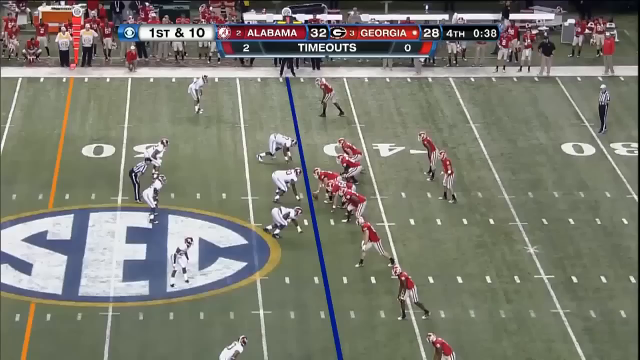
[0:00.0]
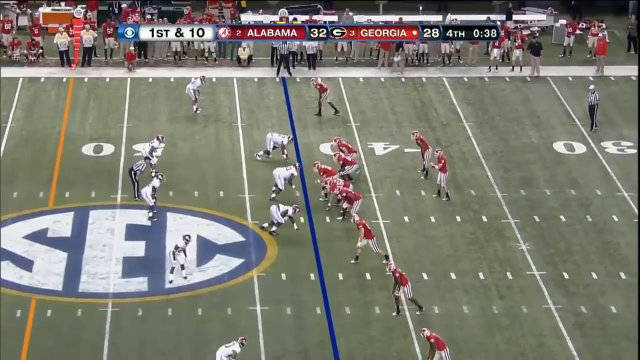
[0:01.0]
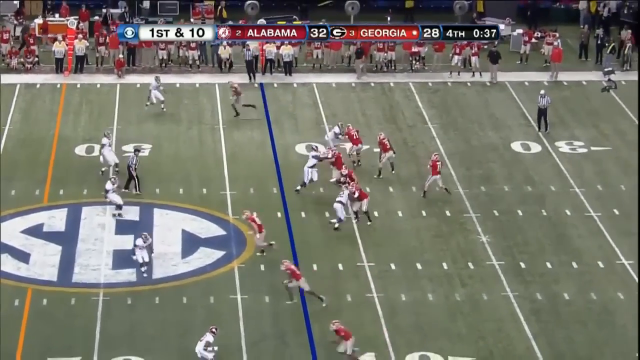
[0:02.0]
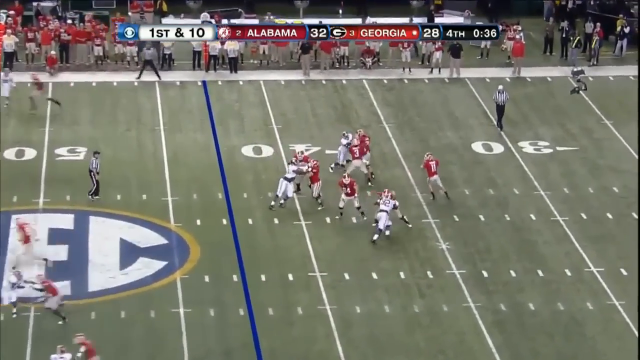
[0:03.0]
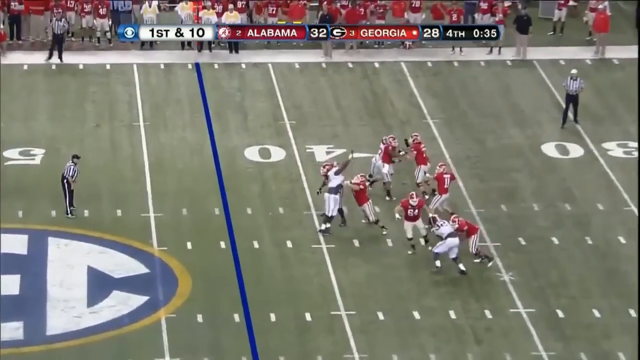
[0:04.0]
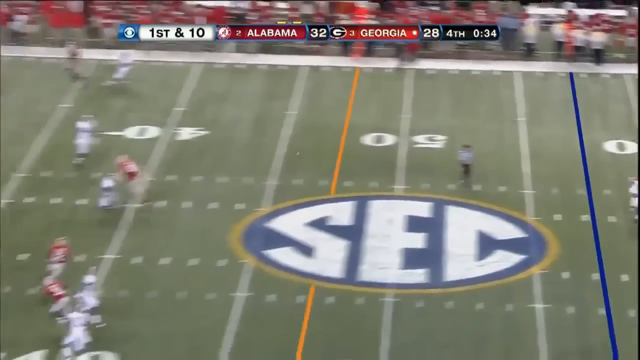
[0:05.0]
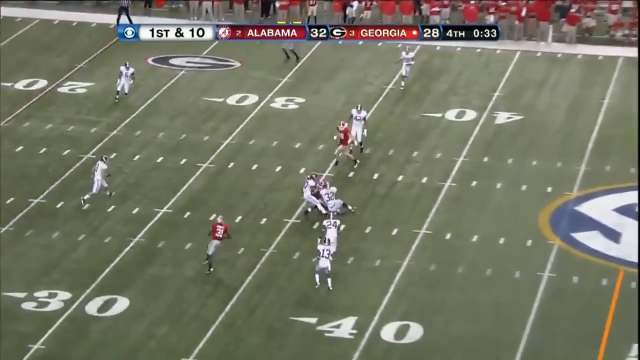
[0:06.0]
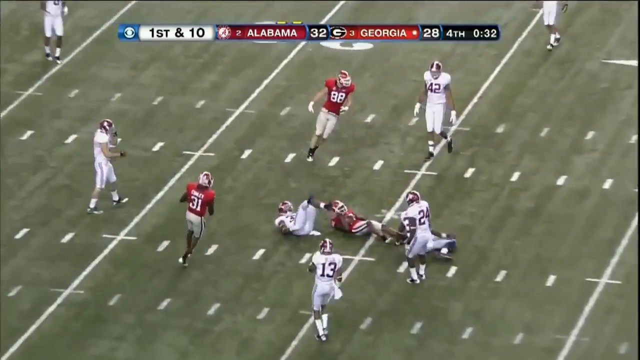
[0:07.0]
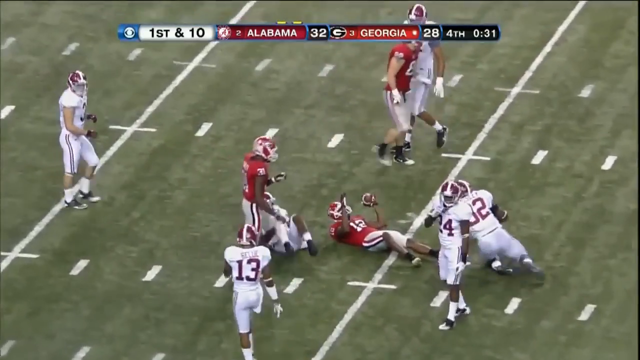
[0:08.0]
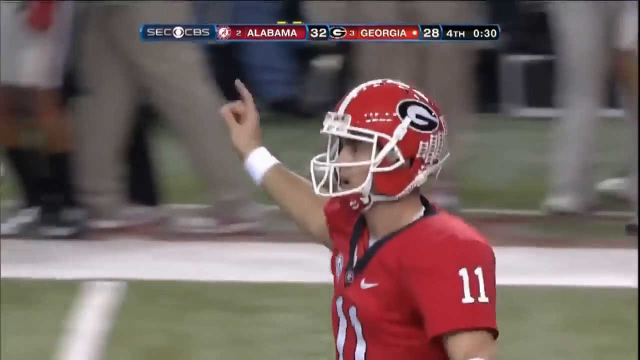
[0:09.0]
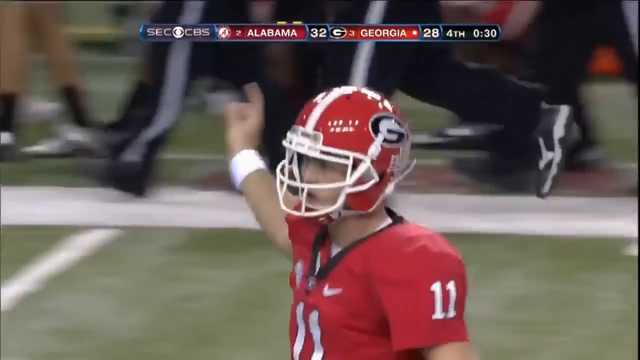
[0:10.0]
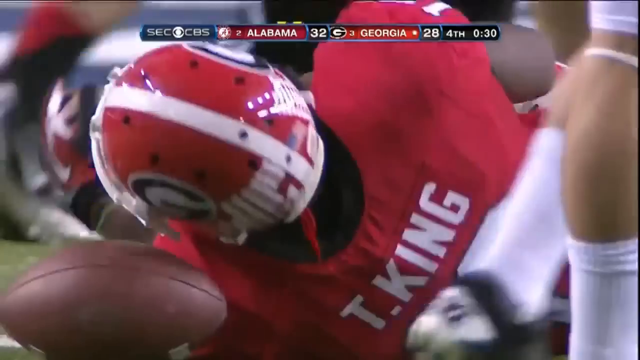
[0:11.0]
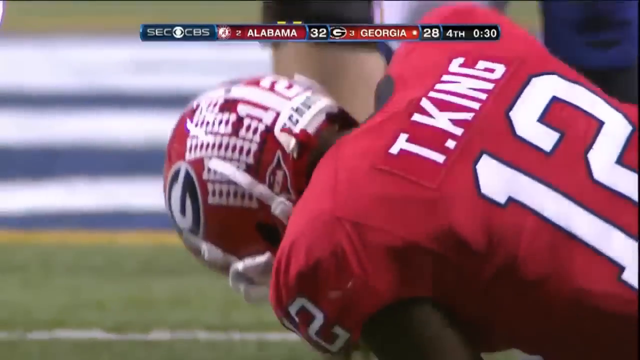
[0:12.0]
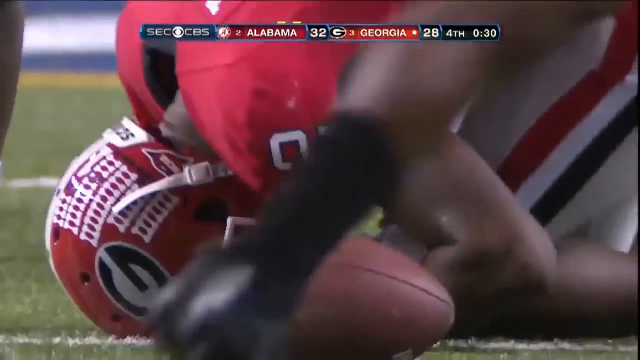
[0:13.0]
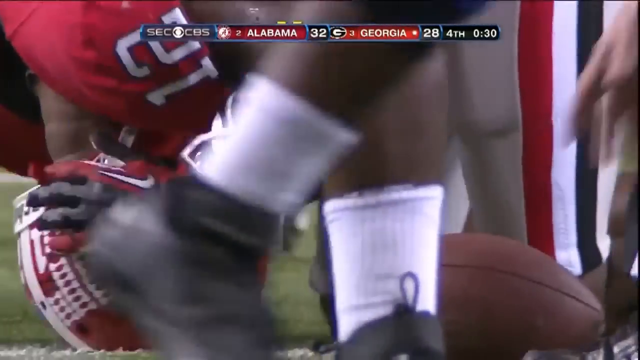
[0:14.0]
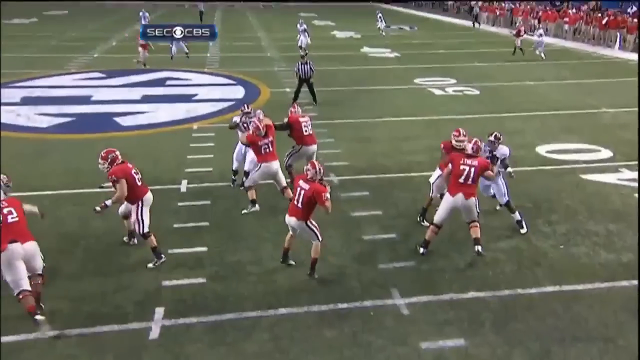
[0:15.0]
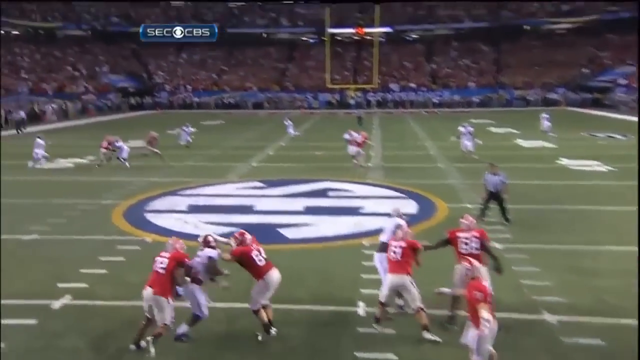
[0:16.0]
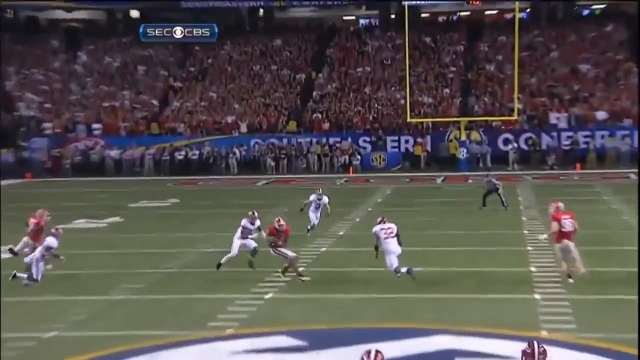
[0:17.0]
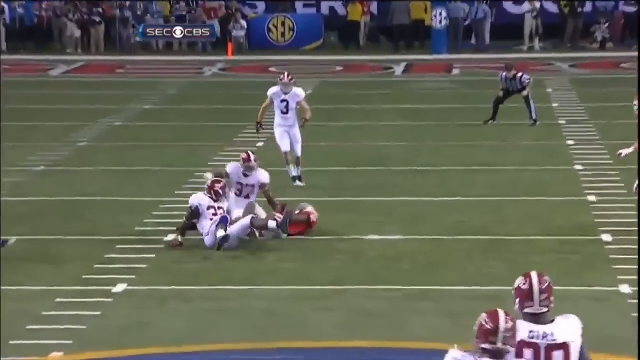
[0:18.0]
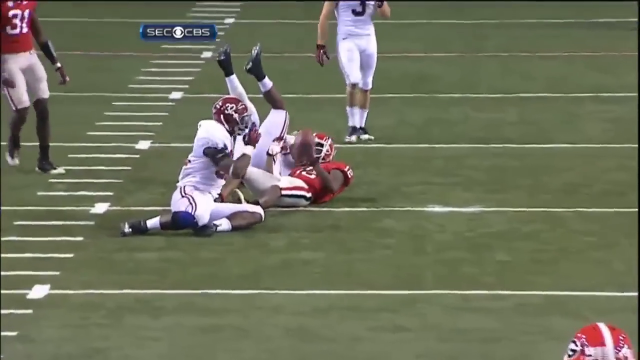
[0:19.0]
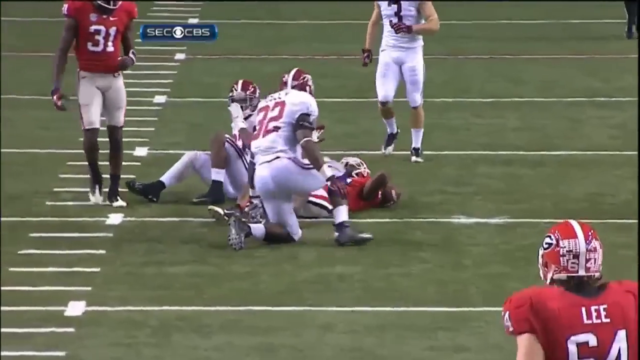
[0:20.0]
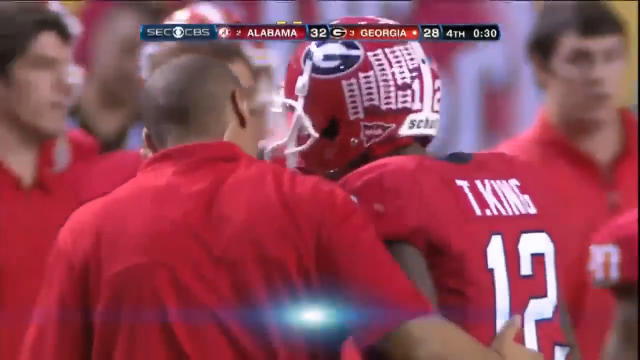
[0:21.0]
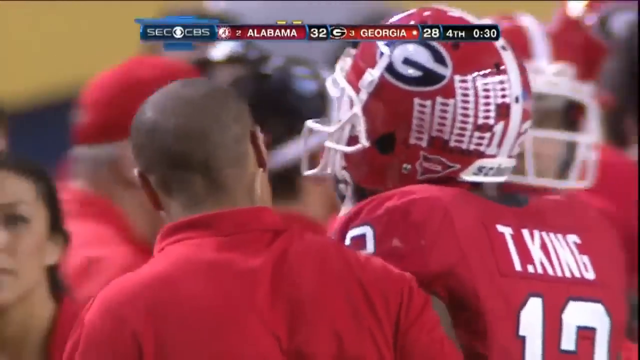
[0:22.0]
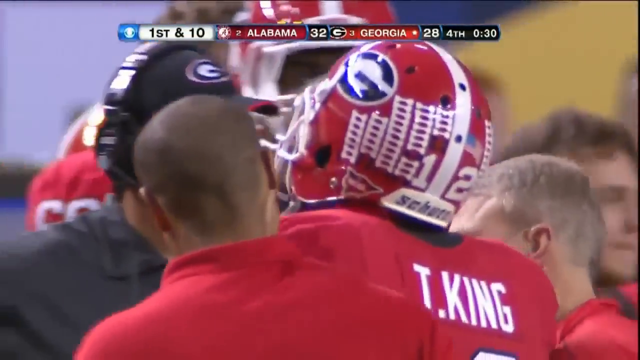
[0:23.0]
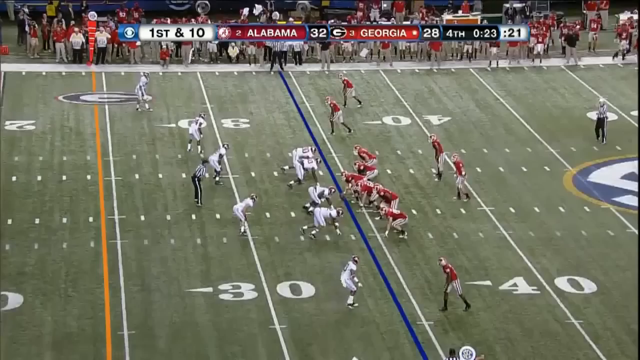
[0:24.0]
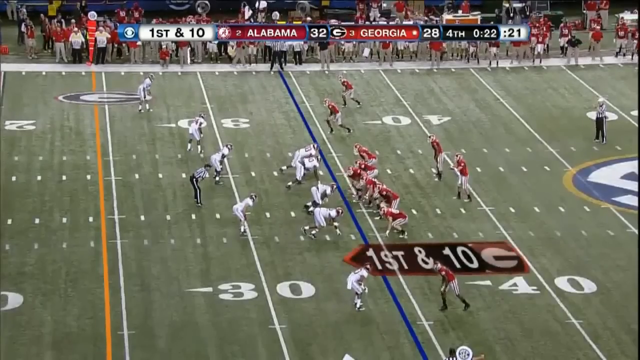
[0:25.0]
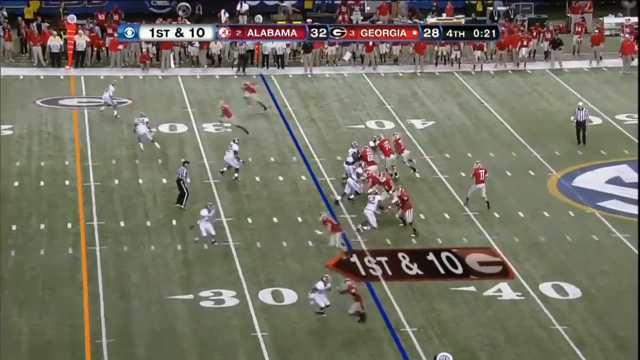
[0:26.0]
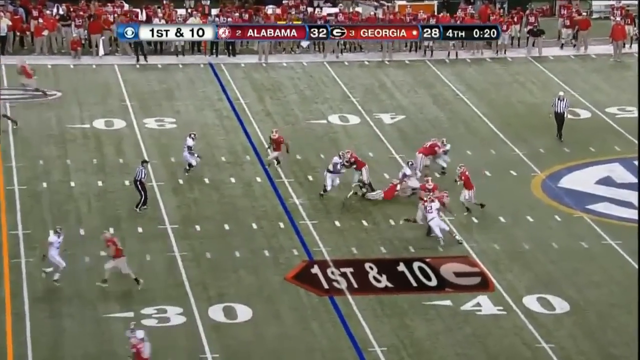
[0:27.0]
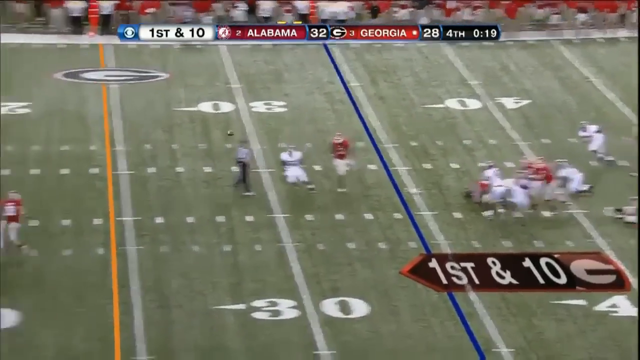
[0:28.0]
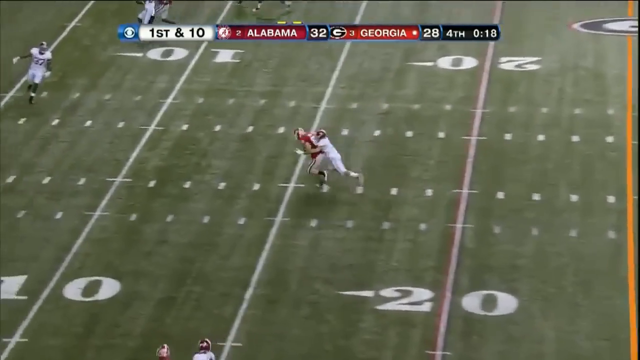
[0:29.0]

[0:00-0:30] An overhead view shows what appears to be a football game. At the bottom left of the field, "SEC" is painted in white letters in a sort of oval shape. Two teams are on the field: on the right side is the offense, wearing red jerseys and silver pants, and on the left side is the defense, wearing primarily white jerseys and pants. A referee is in the middle left, and a second referee is at the very top right. At the top of the video is the scoreboard: the top left reads "1st and 10", to the right of that Alabama has 32 points and Georgia has 28 points, and at the right it shows the 4th quarter with 38 seconds. Below the team names, the timeouts show that Alabama has two and Georgia has zero. The ball is snapped, the quarterback catches it, walks backwards a couple of steps, and looks to the bottom left before getting ready to throw. He throws the ball quite far, probably about 20 yards, and the receiver catches it near the 35-yard line and is immediately tackled by two defenders in white jerseys. A close-up shows the quarterback, number 11, running to the right with his right hand slightly raised and a finger up. Another close-up shows the player who caught the ball clearly in pain; the back of his jersey reads "T. King" and he is number 12. He gets on his knee and his head goes down to the ground. A replay shows him catching the ball and getting hit by the defender. The scene then changes to the player who was hit walking to the sideline.